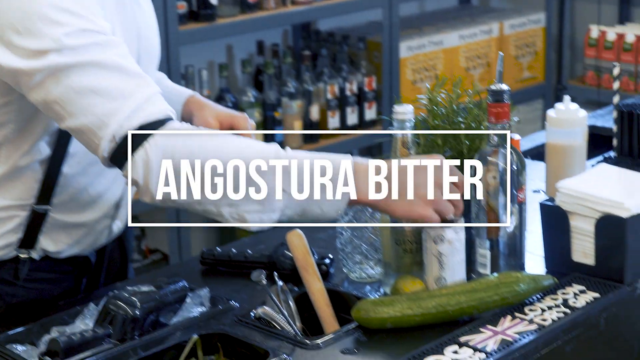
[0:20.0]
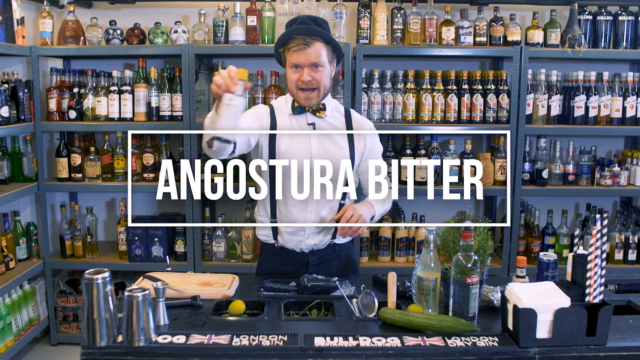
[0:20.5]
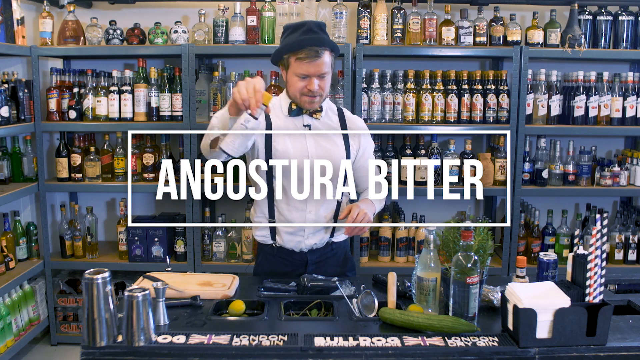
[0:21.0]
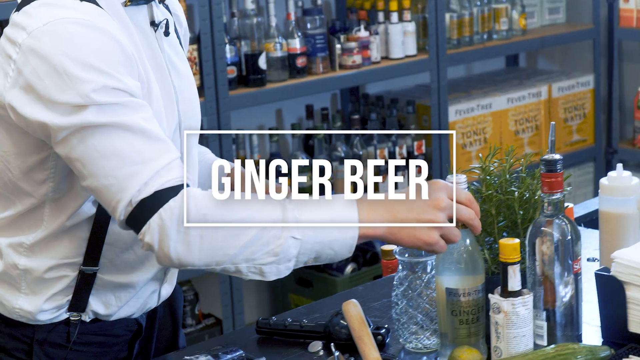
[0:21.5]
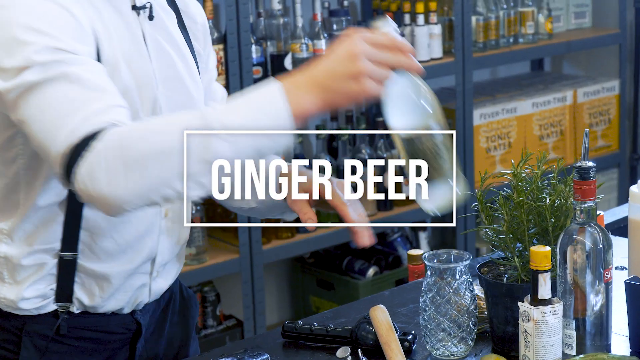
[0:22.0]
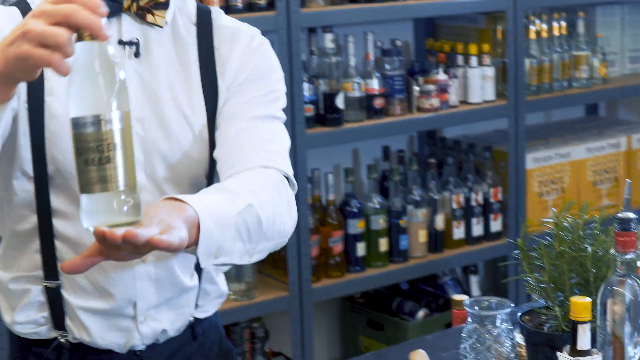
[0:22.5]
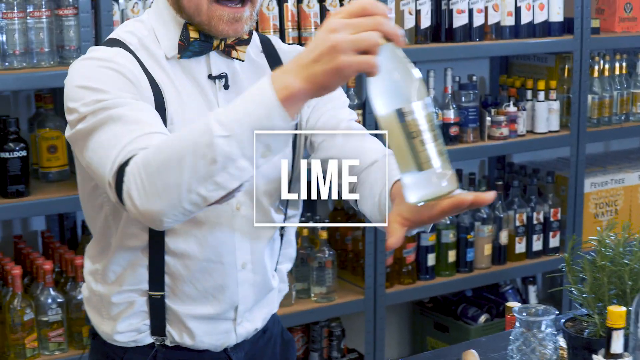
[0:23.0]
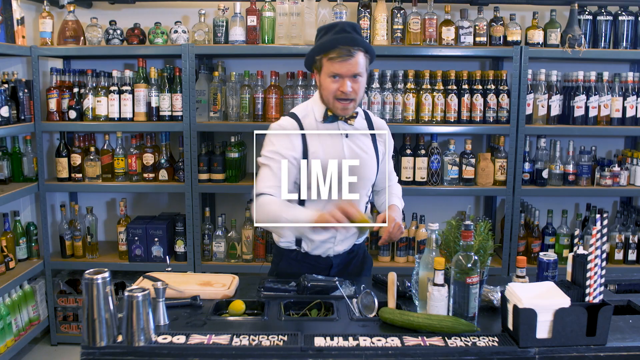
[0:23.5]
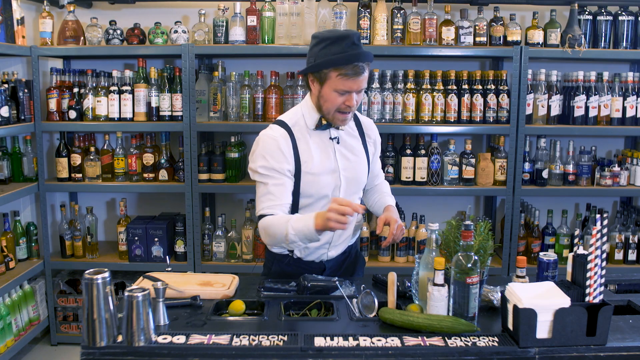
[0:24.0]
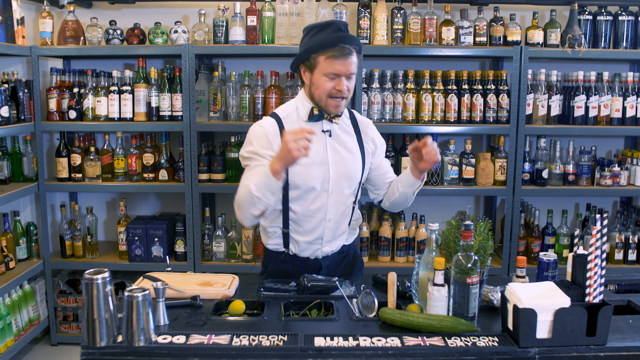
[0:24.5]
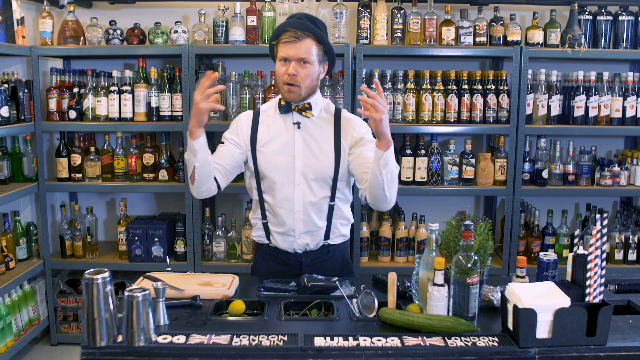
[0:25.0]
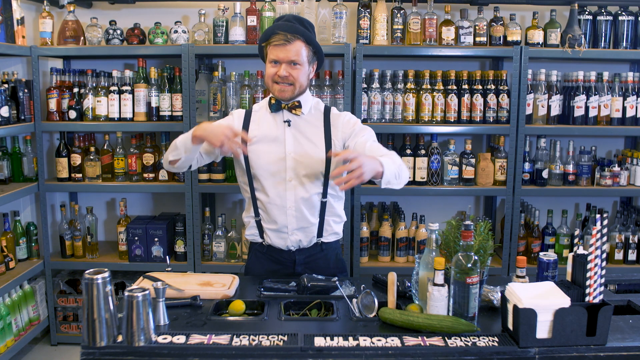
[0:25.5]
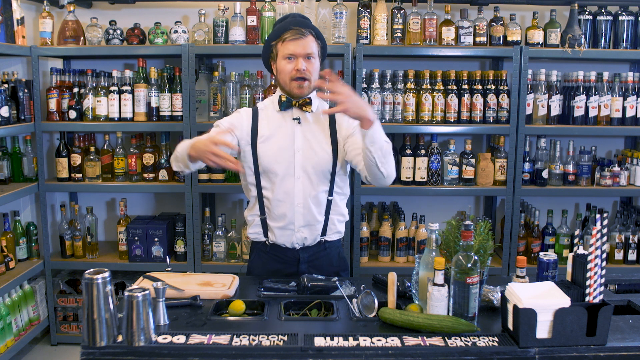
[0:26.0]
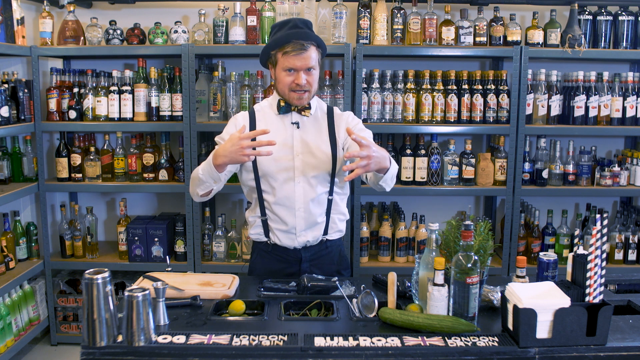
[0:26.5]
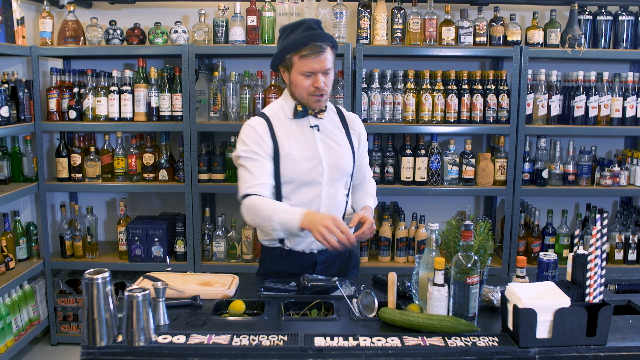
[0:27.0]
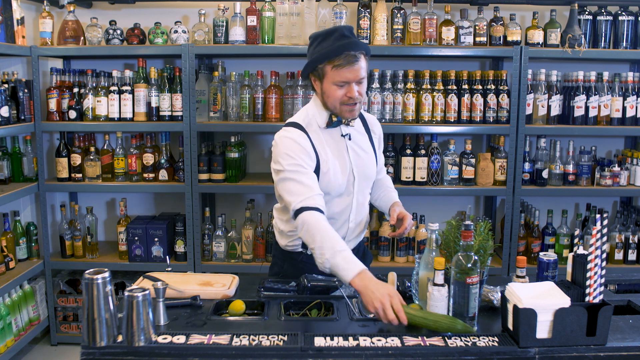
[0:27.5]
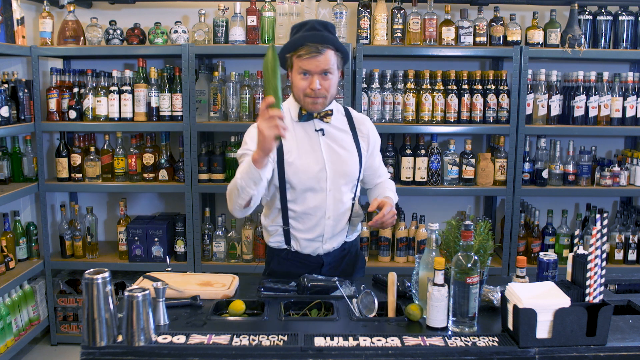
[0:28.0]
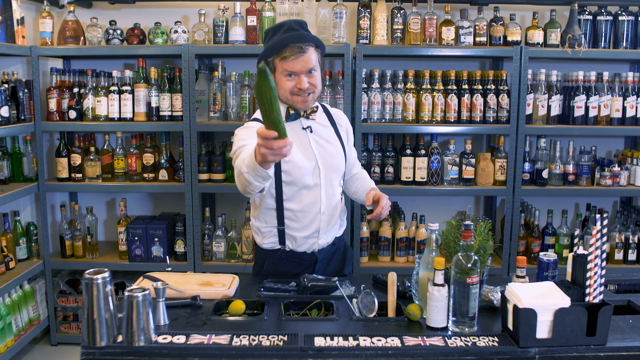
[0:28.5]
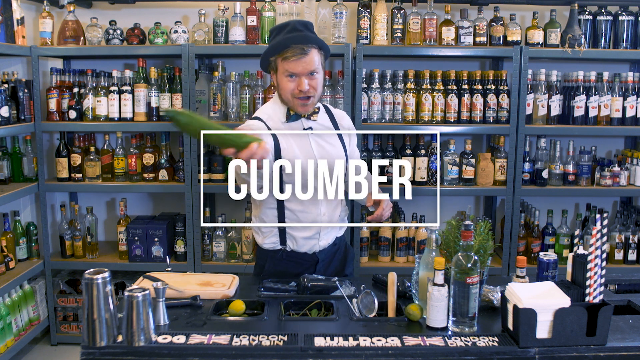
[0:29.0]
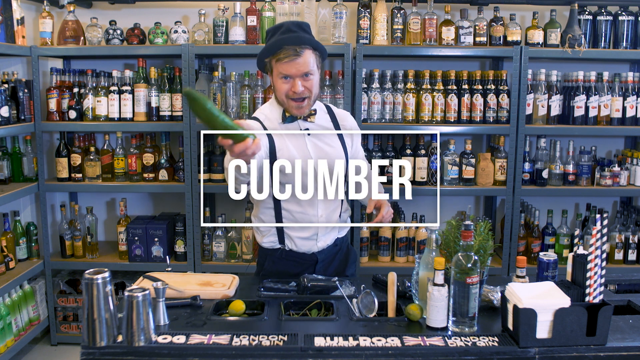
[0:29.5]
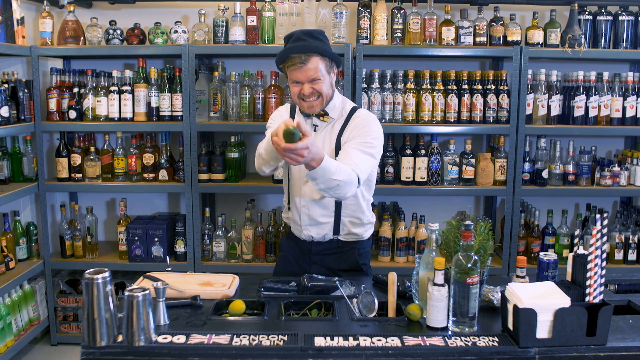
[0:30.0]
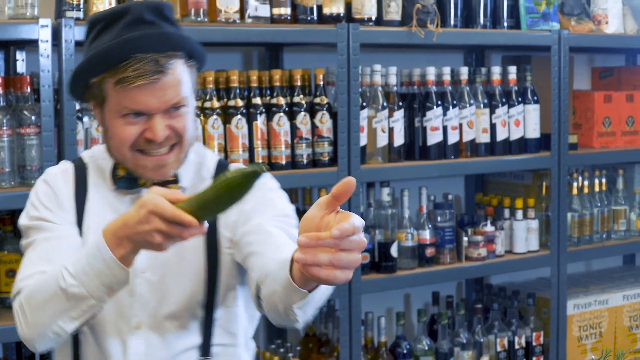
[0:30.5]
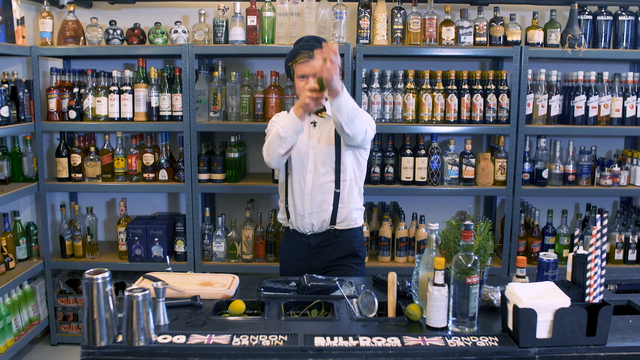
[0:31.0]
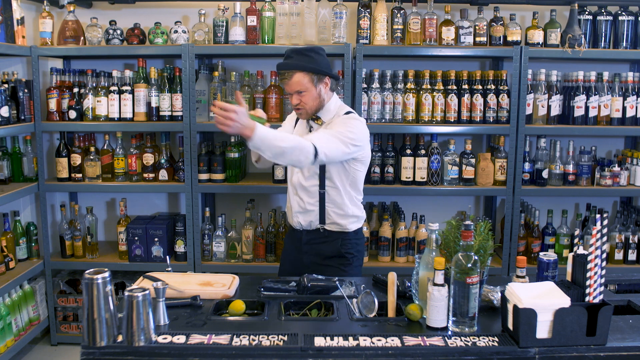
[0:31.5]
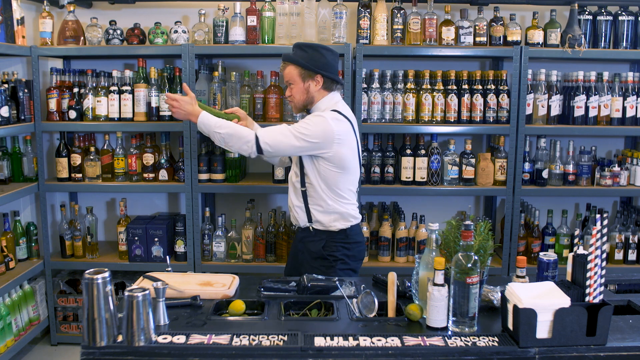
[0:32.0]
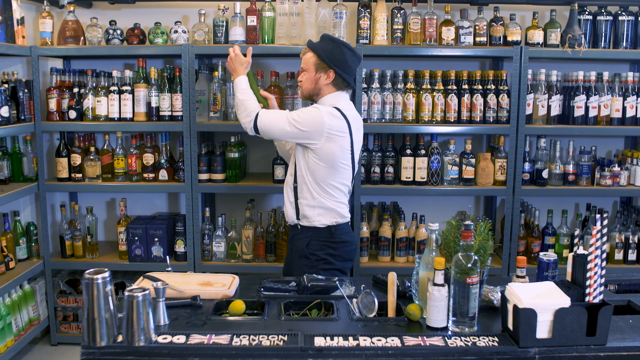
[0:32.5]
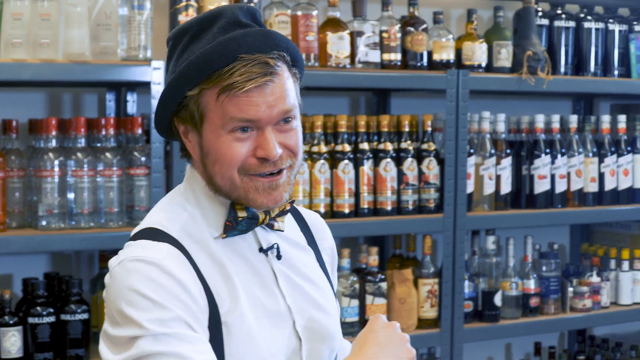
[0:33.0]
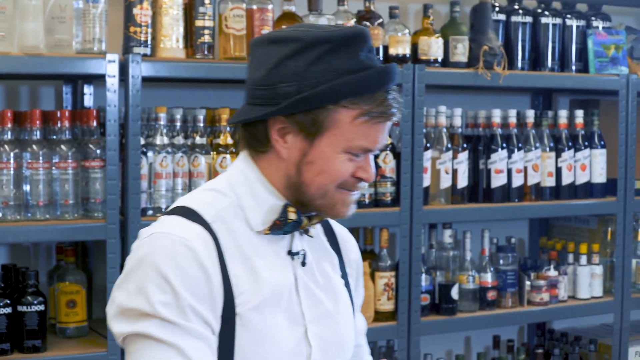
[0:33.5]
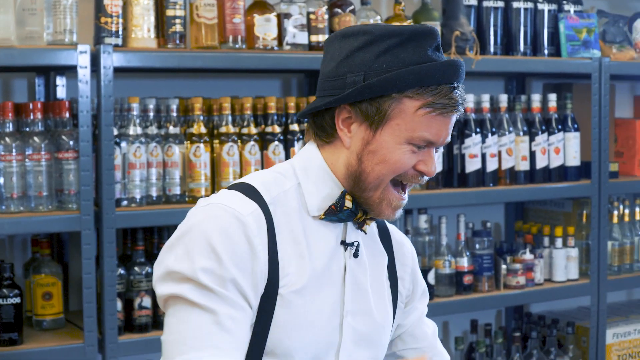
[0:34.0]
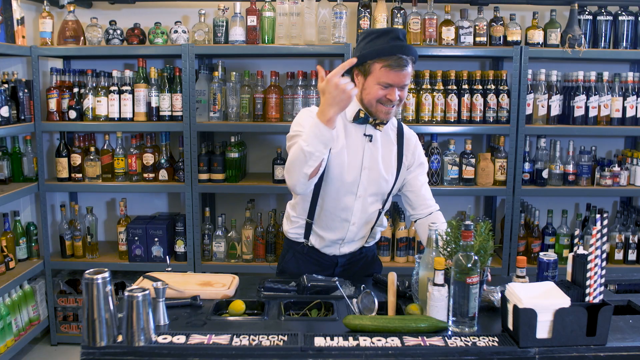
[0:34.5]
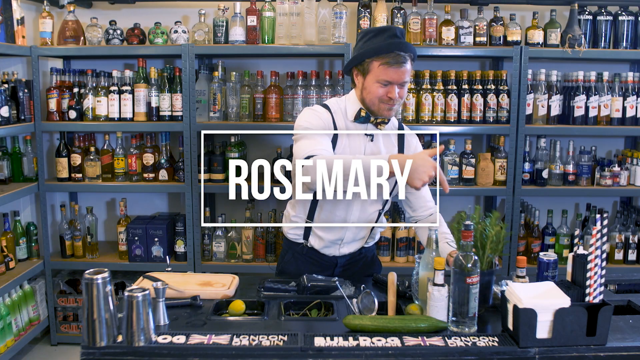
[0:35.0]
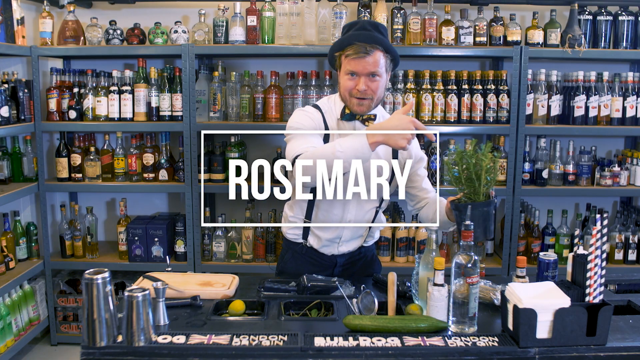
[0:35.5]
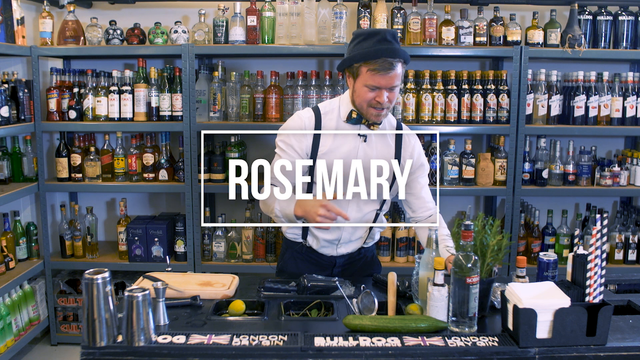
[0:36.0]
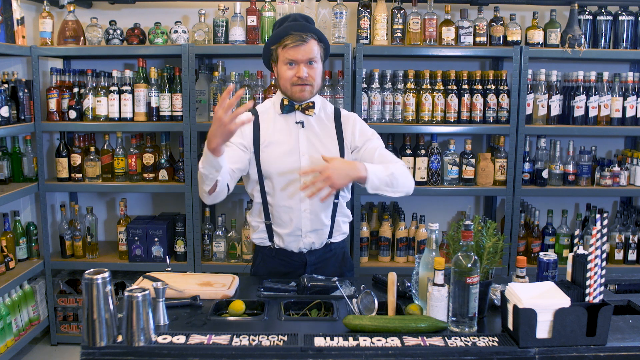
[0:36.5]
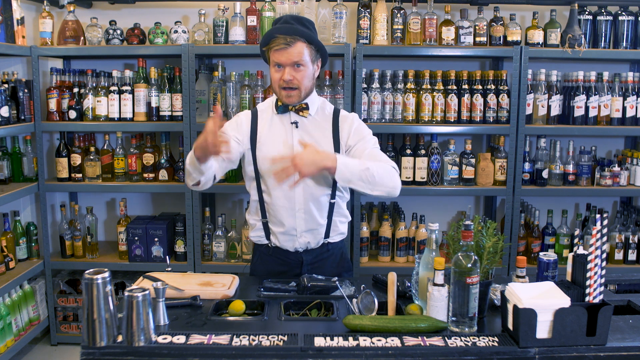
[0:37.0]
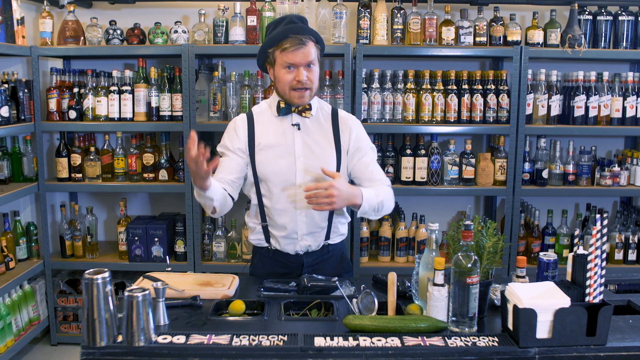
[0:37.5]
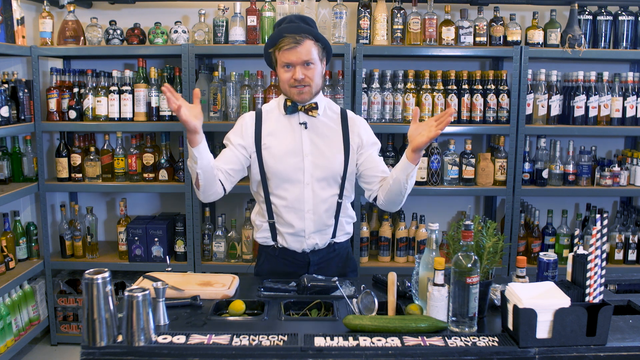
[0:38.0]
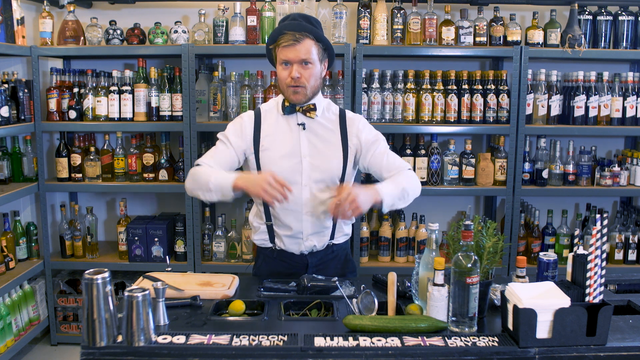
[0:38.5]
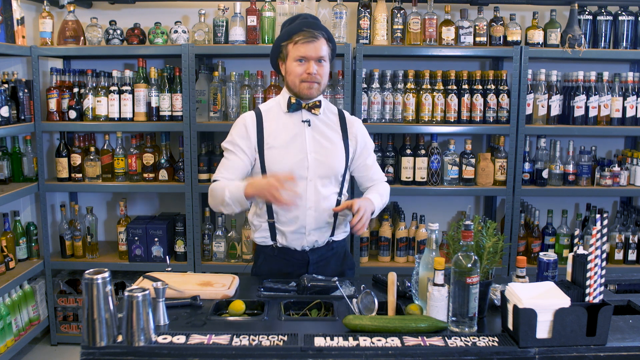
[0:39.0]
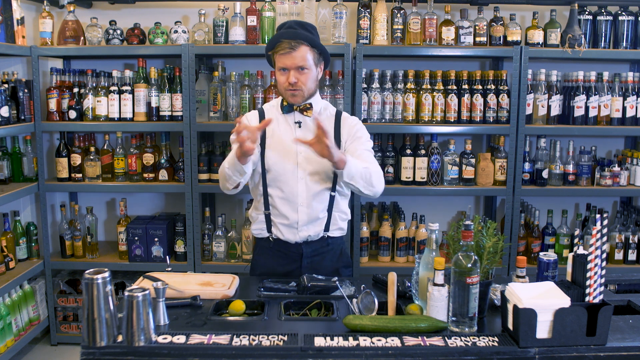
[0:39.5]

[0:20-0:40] Rasmus grabs another bottle from the table, and text identifies it as "Angostura Bitter," written in white inside a rectangular frame with white lines. He picks up the bottle, sways it side to side and places it back on the table. The next bottle he picks up is the ginger beer, also labeled in white text centered on the screen; he holds it by the neck and moves it side to side. Next comes the lime. Gesticulating, he picks up a green cucumber and waves it at the screen, then holds it like a weapon, pointing it and "shooting" as if the cucumber were a gun. Seemingly excited, he points at the green rosemary plants on the table.